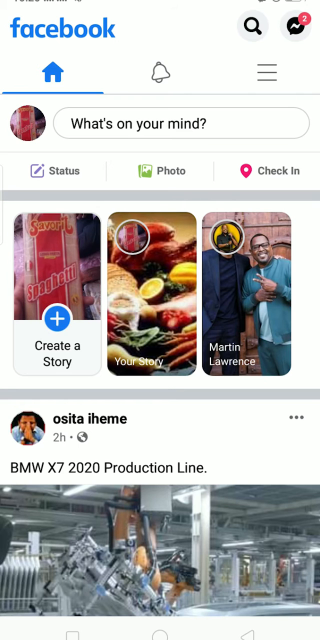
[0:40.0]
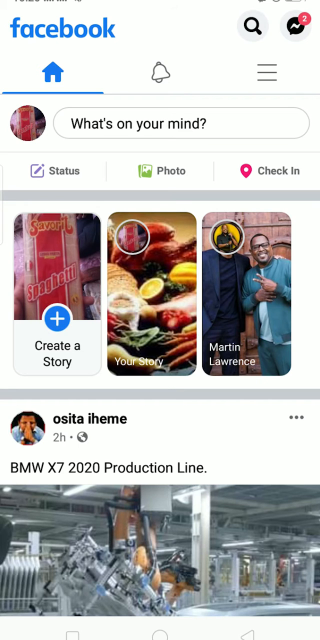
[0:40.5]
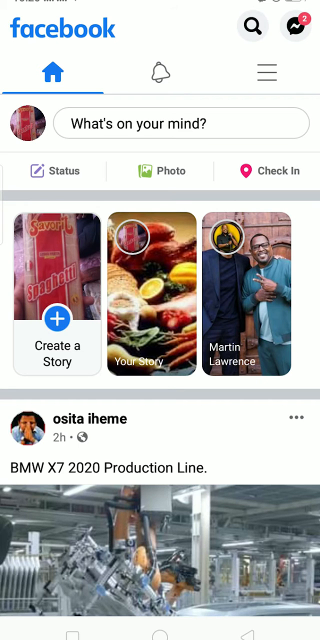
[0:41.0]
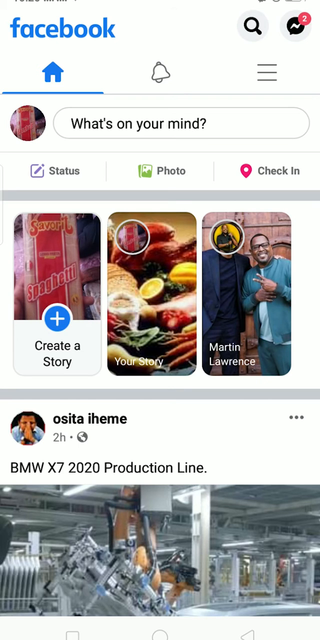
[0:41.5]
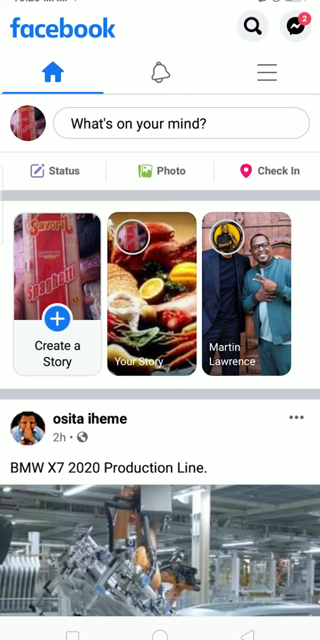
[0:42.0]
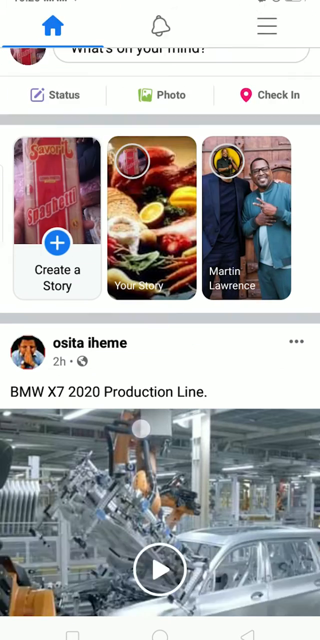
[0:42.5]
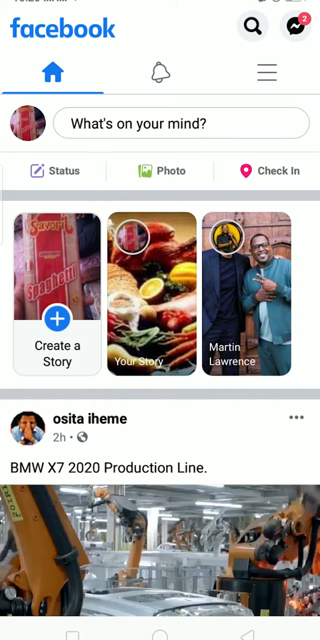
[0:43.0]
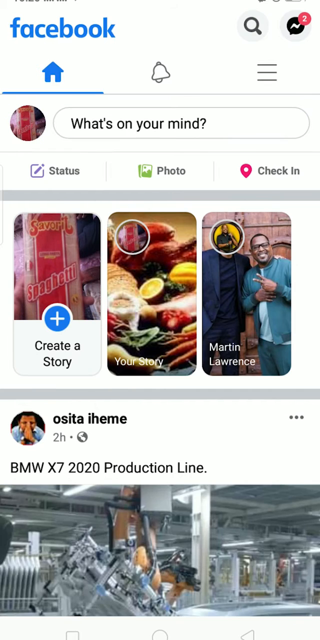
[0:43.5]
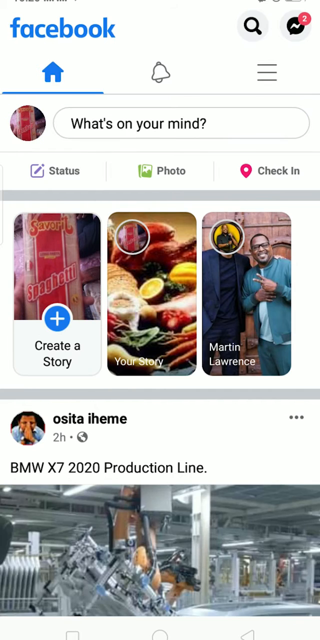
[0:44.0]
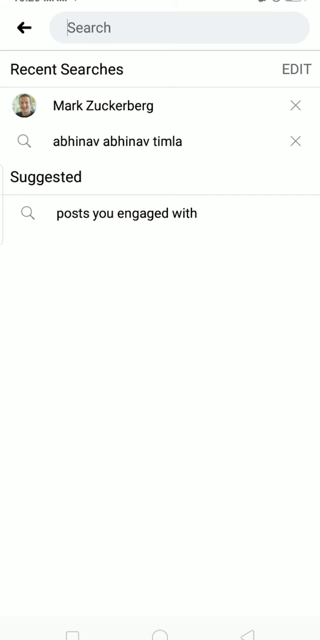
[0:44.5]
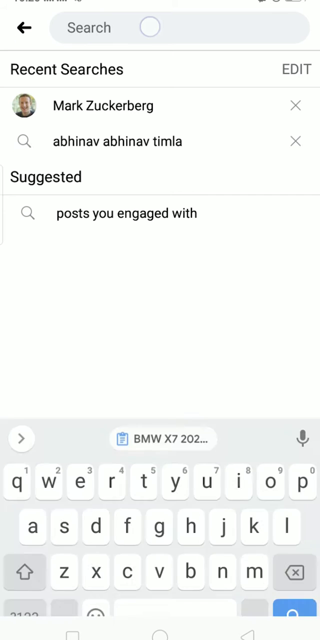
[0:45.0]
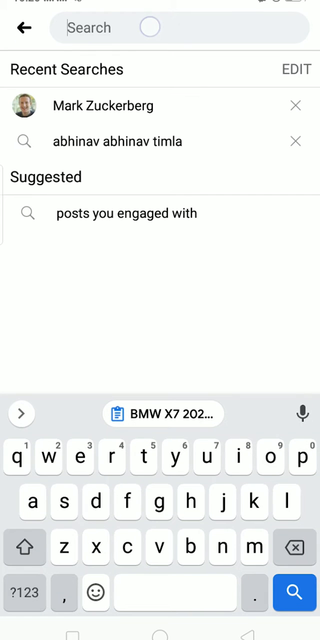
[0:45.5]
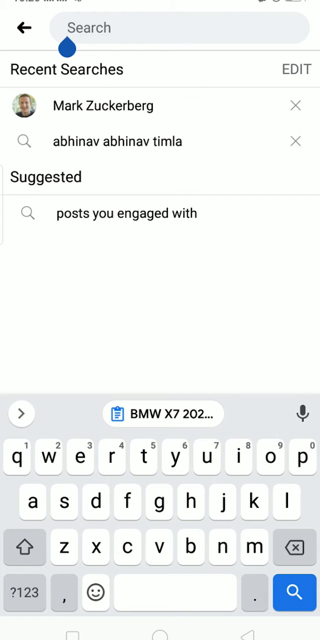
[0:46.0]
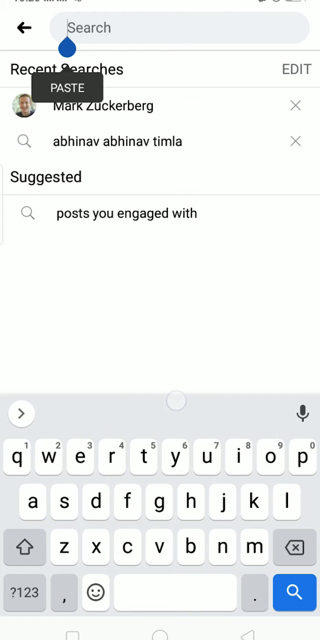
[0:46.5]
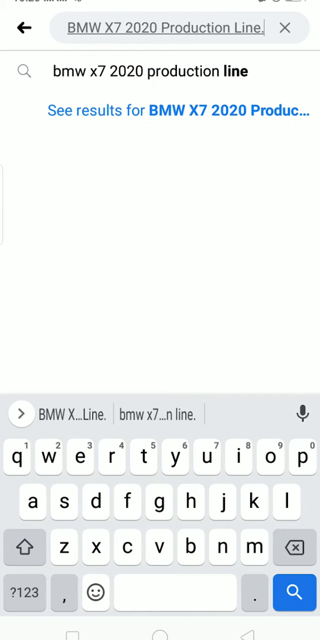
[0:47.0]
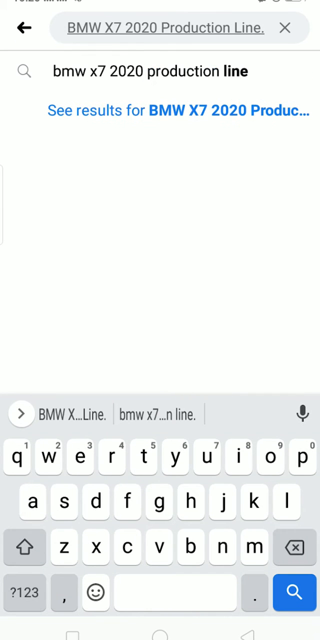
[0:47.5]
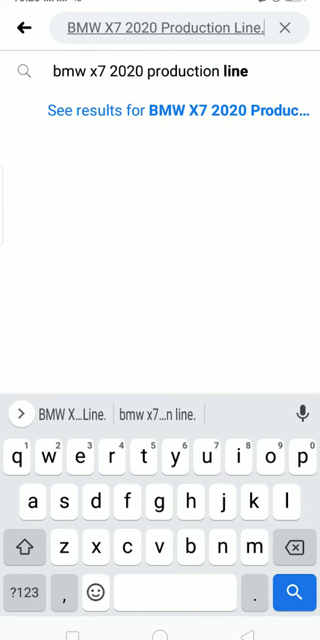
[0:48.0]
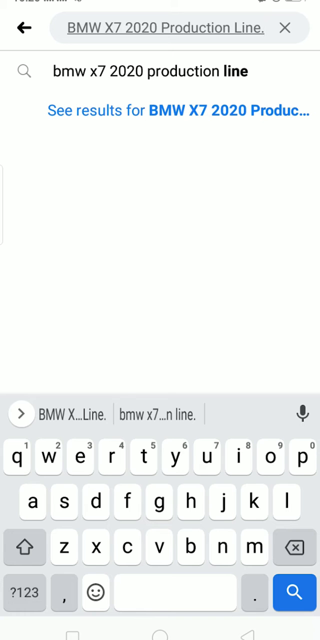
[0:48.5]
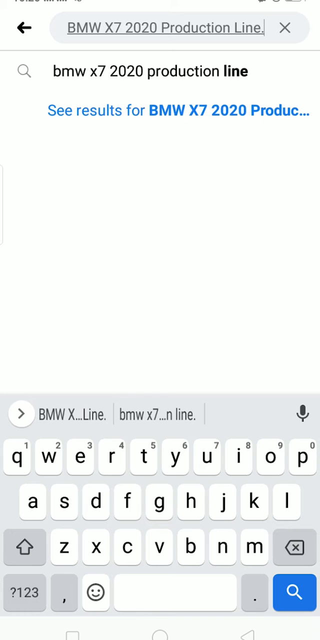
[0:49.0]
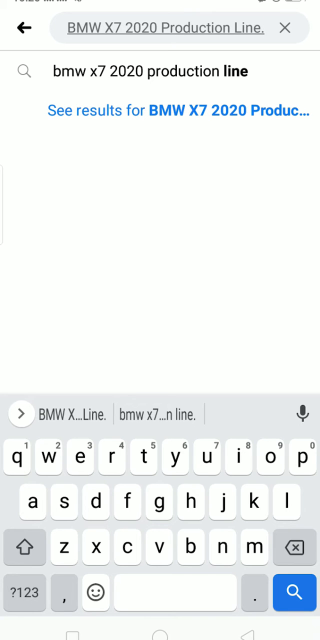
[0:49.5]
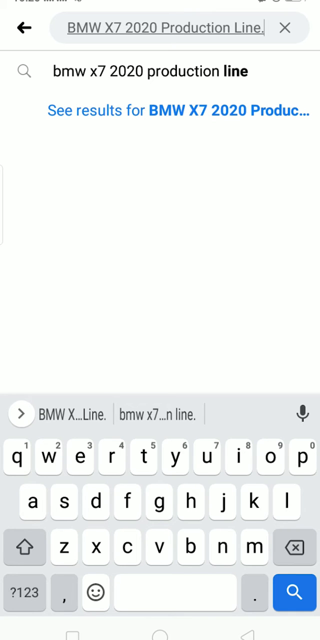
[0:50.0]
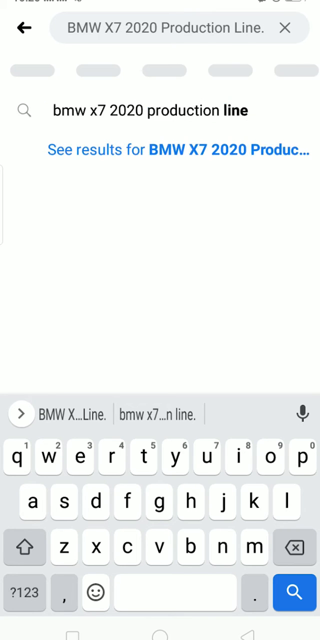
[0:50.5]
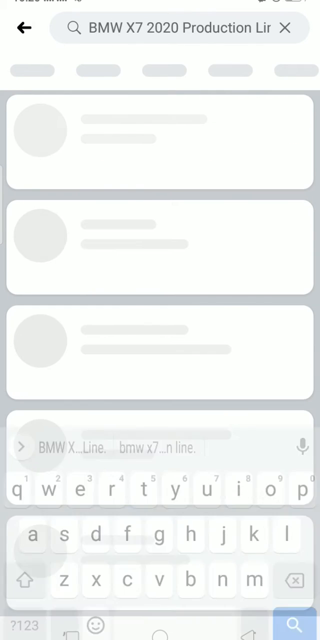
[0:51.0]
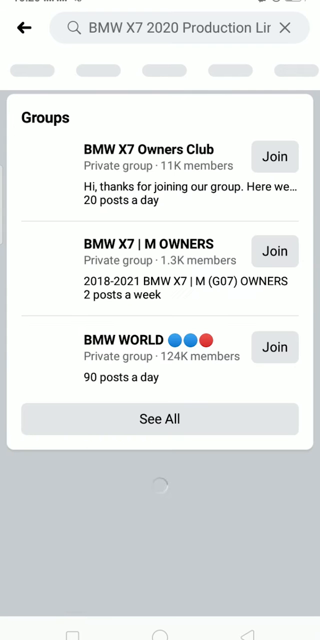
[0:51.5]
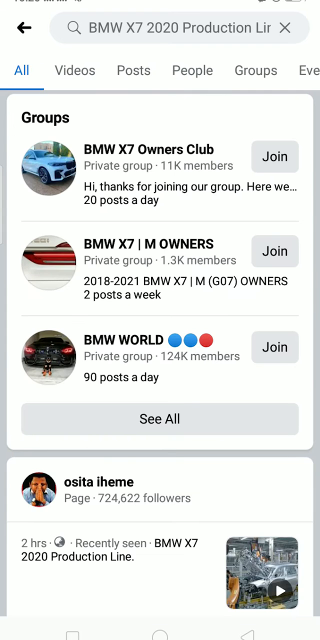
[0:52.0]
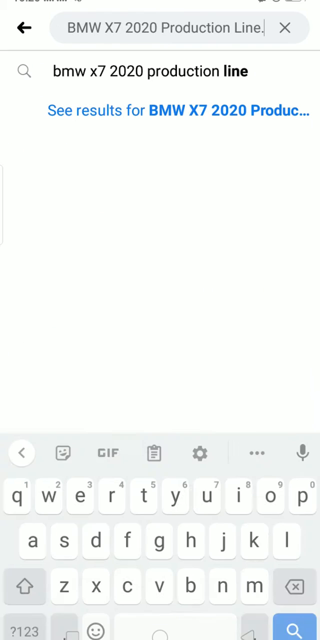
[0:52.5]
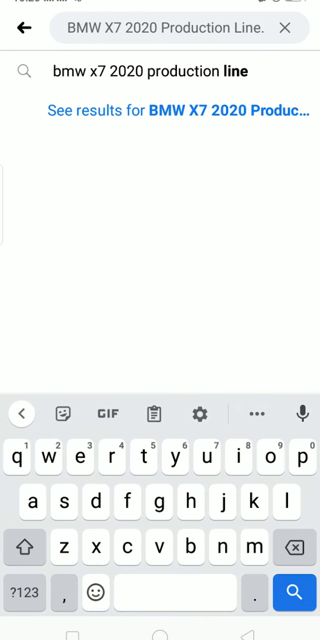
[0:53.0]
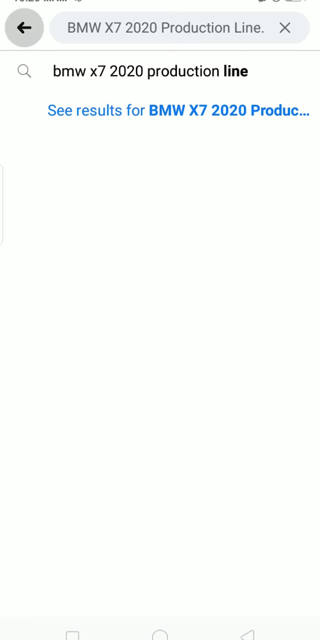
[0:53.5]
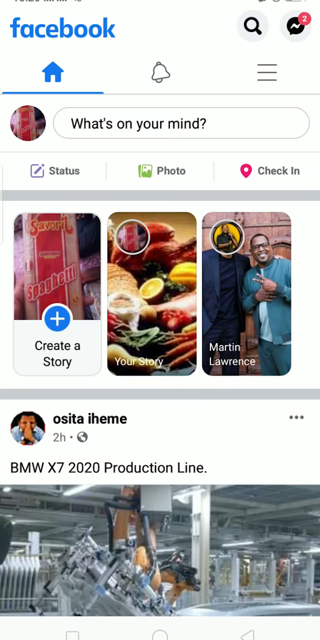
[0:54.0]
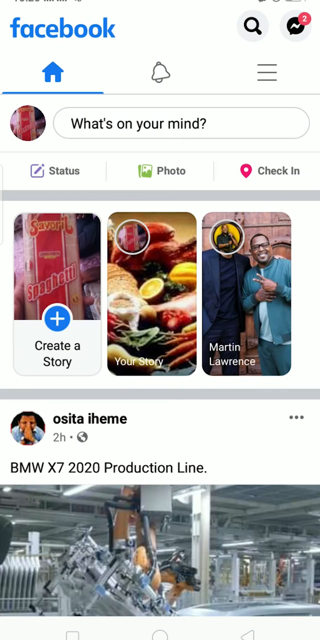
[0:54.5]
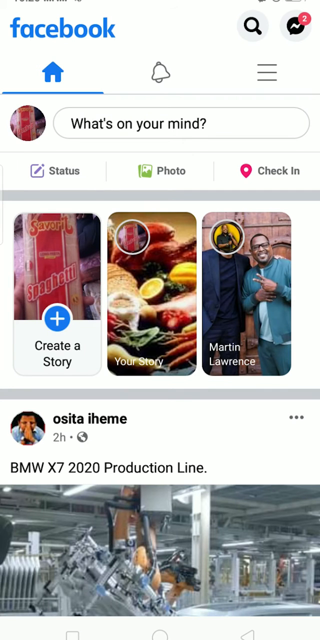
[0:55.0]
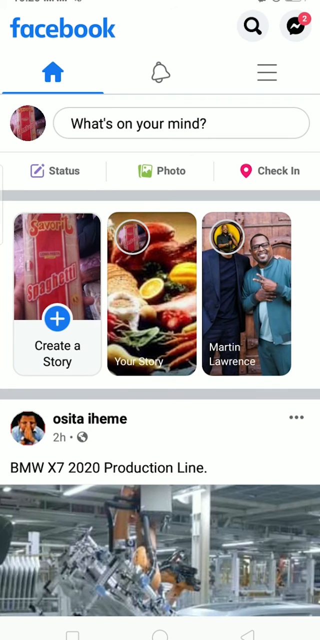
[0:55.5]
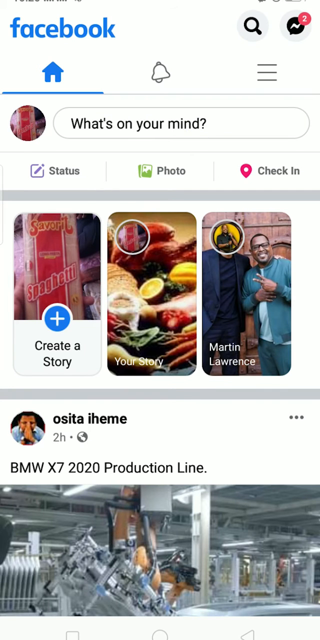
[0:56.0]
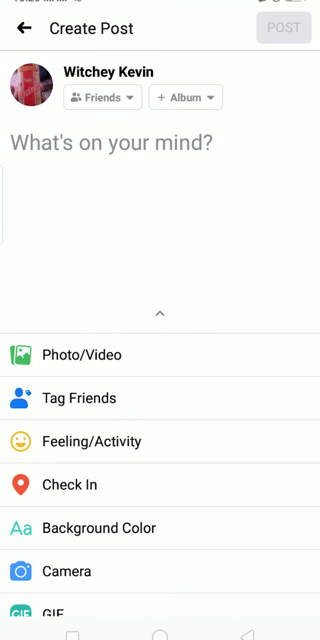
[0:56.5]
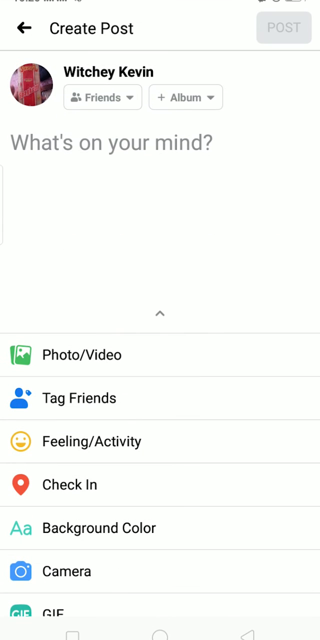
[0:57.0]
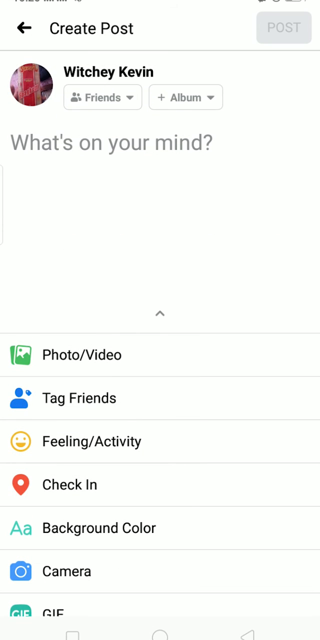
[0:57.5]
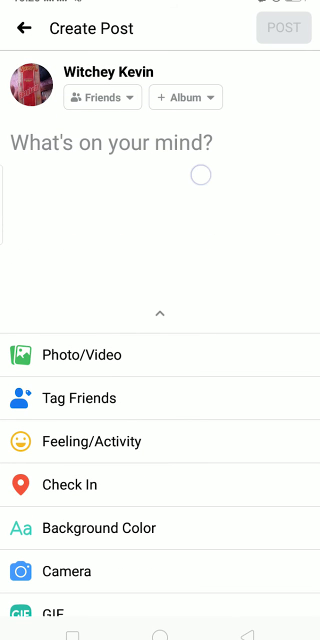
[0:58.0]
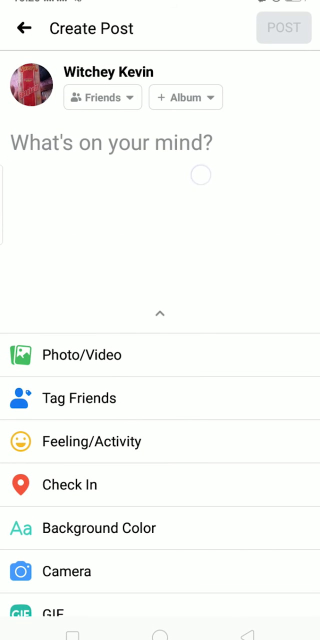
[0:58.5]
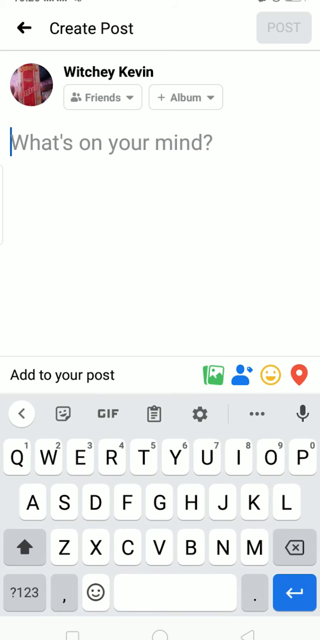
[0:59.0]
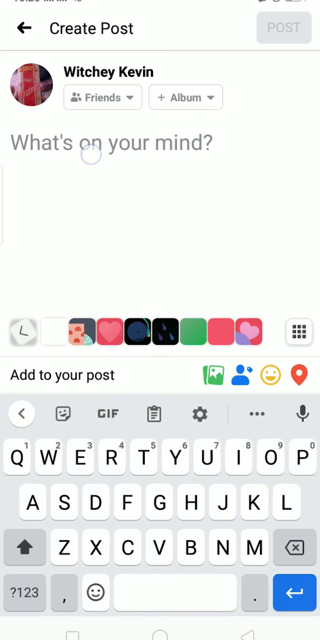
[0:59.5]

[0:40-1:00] The video starts with a static image, then begins jumping all over the place, kind of fast-forwarding through the video a number of times. A keyboard screen pops up, and the person copies and pastes "BMW 2020 production line." More things pop up, and the video jumps forward and back a couple of times. The person then goes back onto what looks like Facebook and starts typing into the "what's on your mind" area, bouncing all over the place. They paste the BMW production text, something pulls up, they click back, and they click on the "what's on your mind" area. They seem about to type something but then don't.